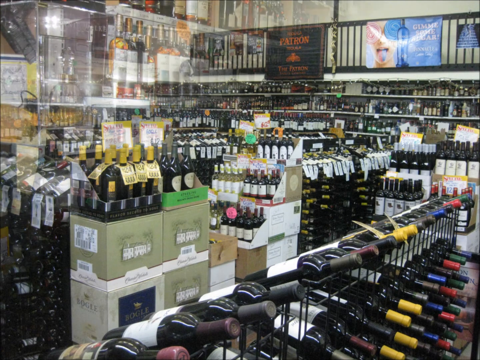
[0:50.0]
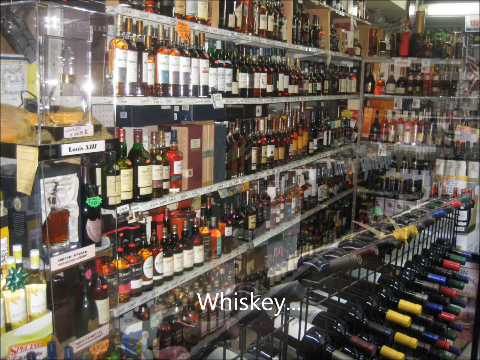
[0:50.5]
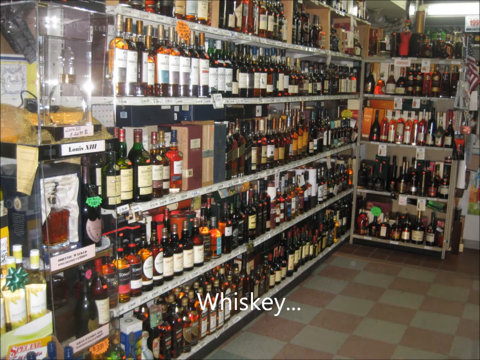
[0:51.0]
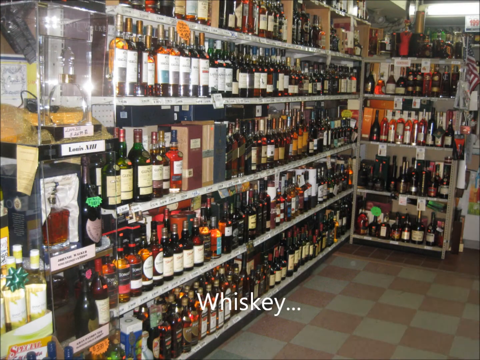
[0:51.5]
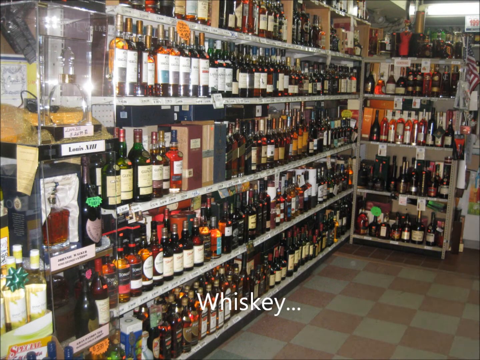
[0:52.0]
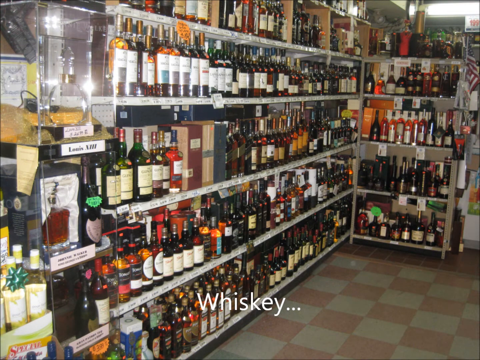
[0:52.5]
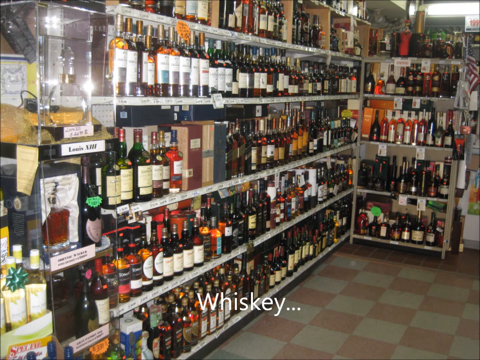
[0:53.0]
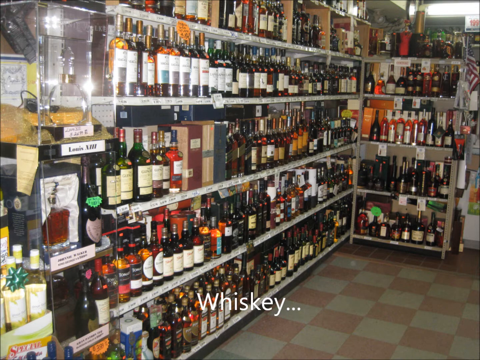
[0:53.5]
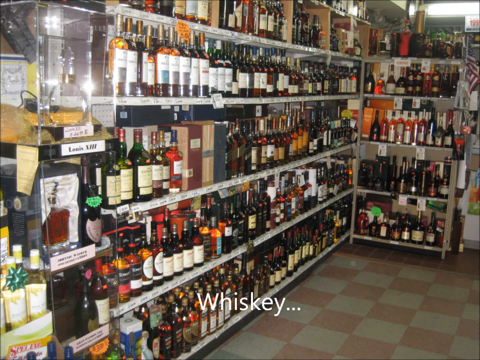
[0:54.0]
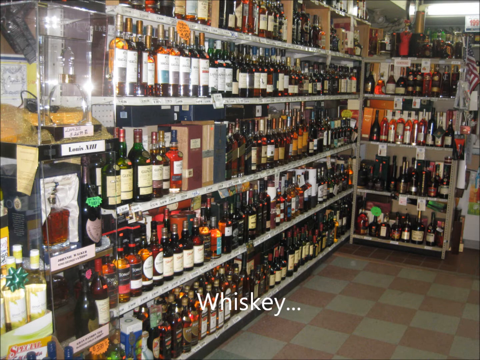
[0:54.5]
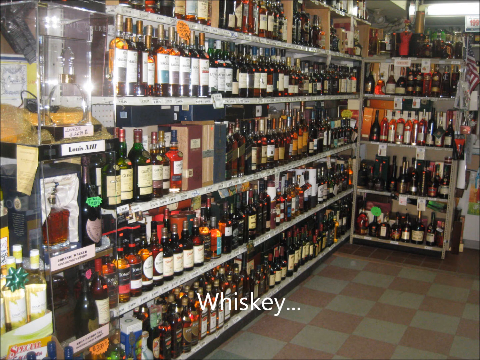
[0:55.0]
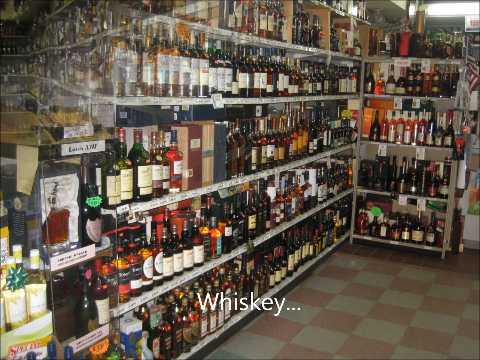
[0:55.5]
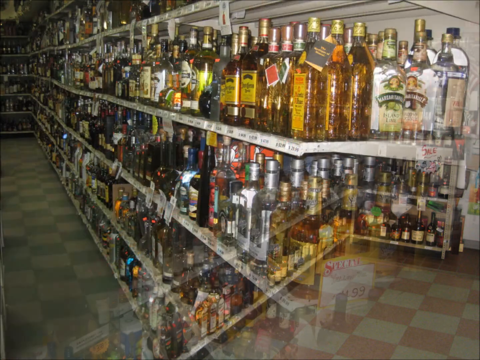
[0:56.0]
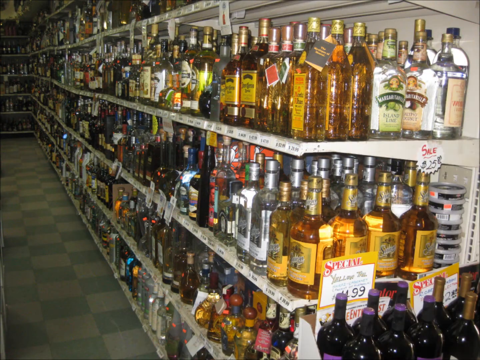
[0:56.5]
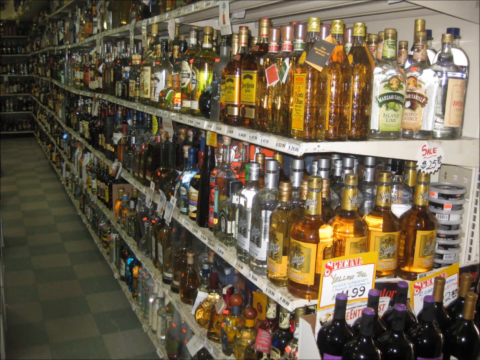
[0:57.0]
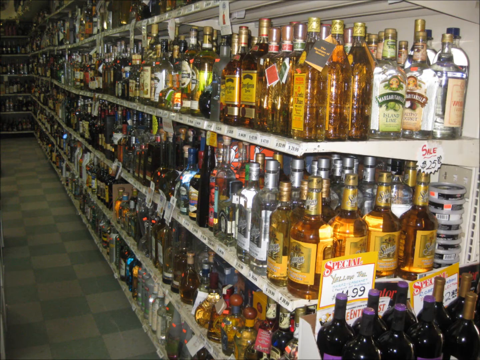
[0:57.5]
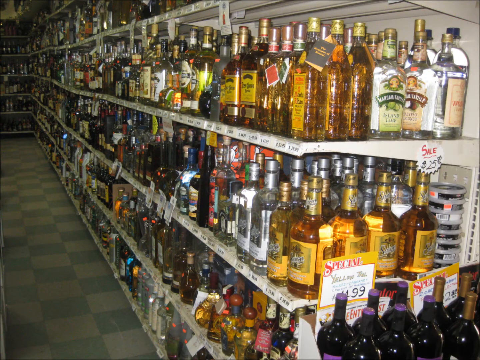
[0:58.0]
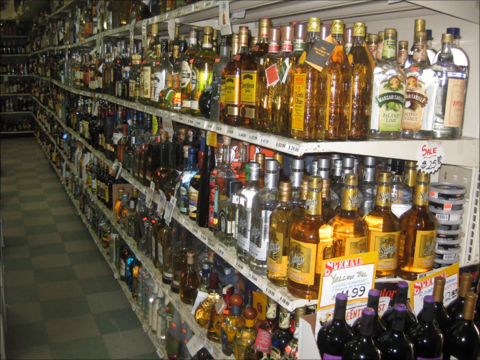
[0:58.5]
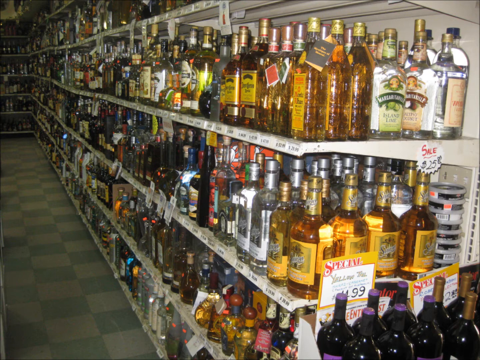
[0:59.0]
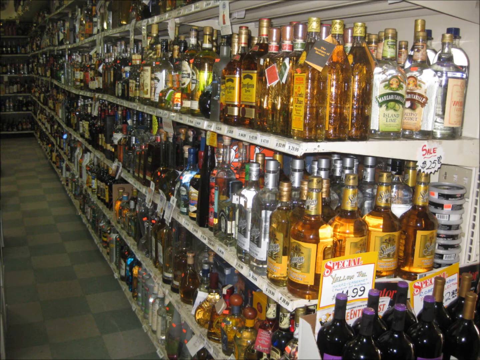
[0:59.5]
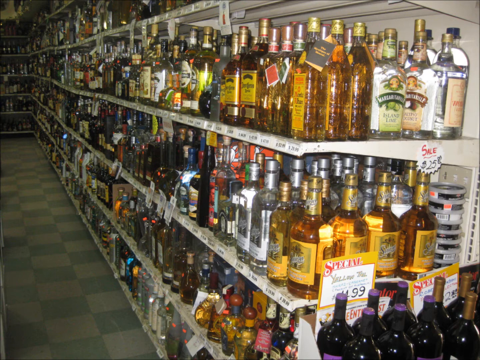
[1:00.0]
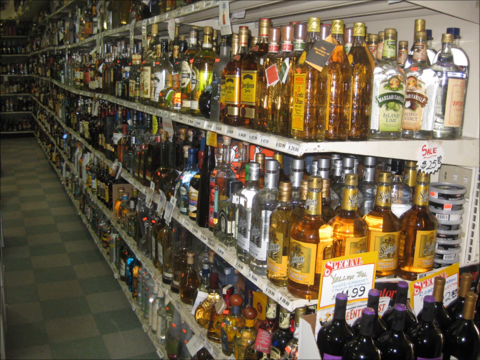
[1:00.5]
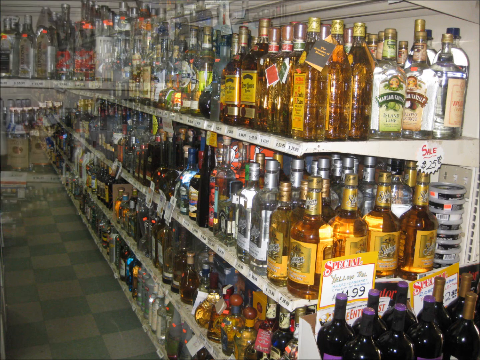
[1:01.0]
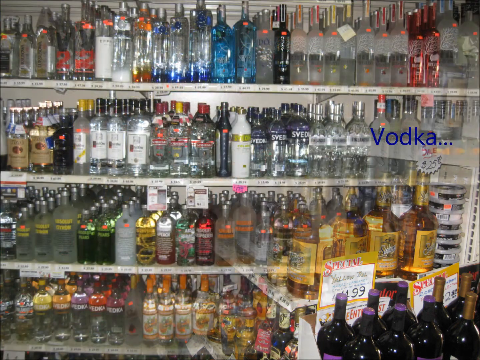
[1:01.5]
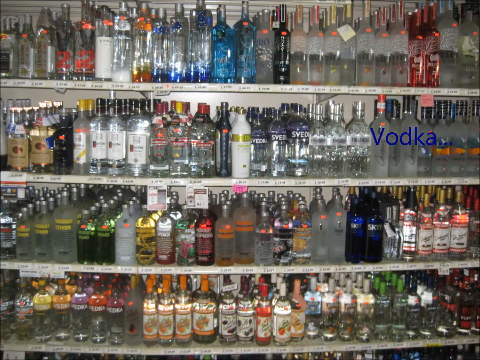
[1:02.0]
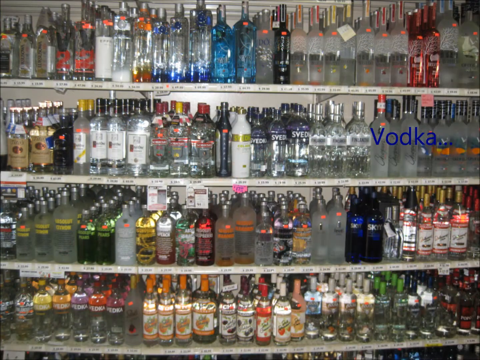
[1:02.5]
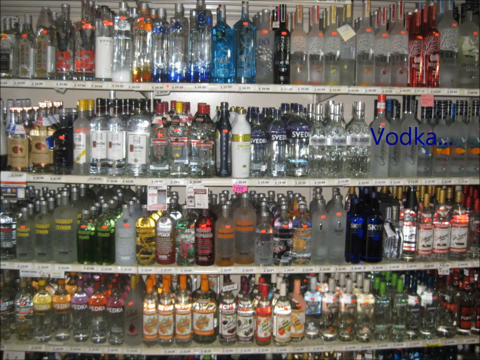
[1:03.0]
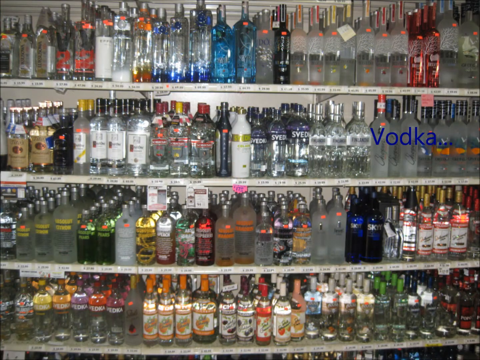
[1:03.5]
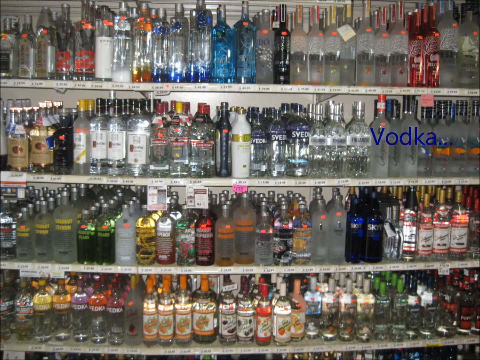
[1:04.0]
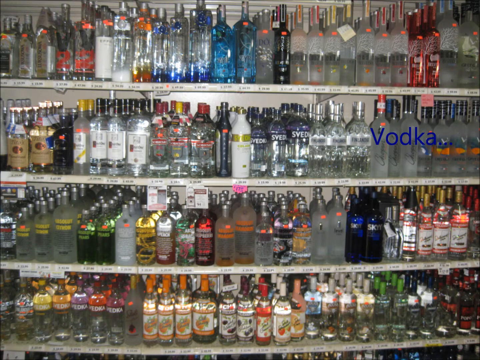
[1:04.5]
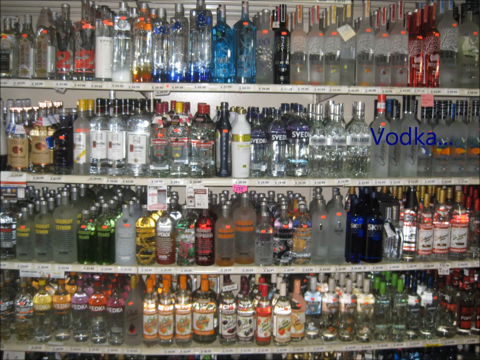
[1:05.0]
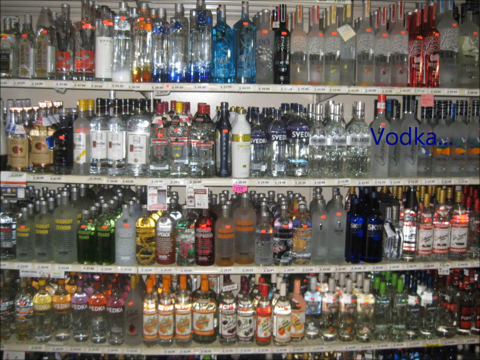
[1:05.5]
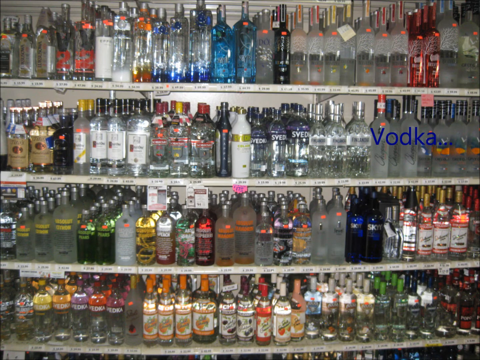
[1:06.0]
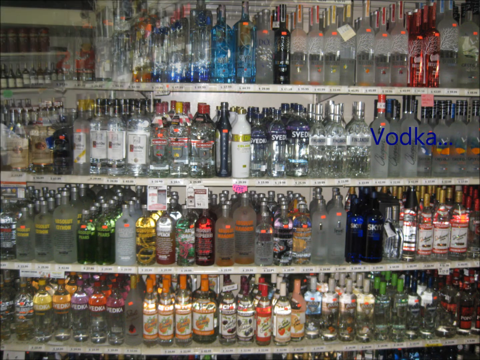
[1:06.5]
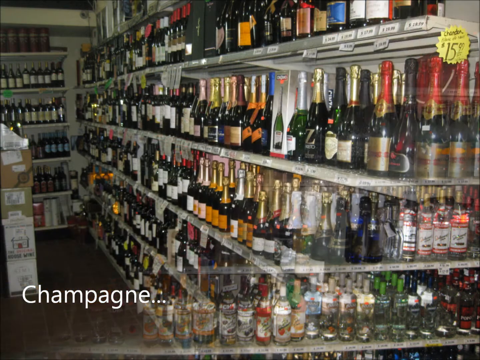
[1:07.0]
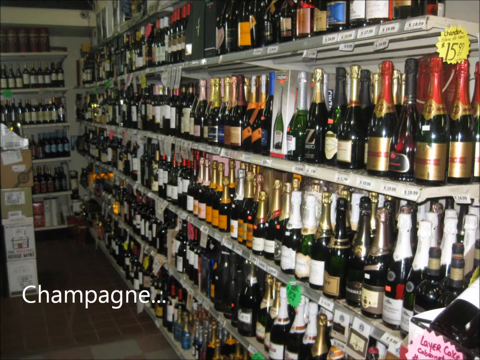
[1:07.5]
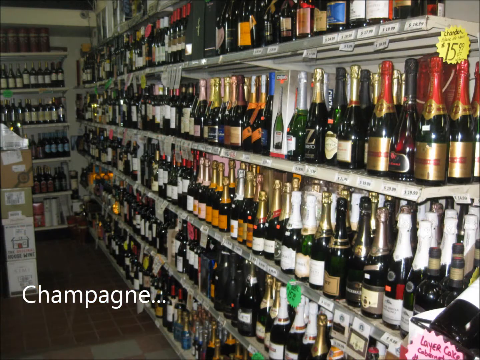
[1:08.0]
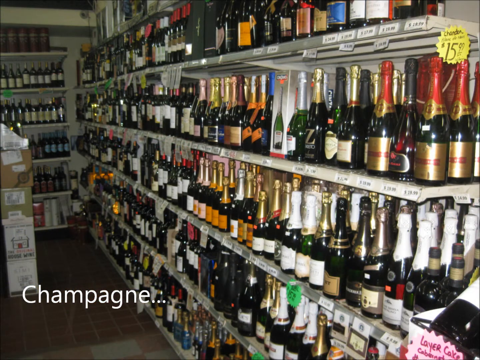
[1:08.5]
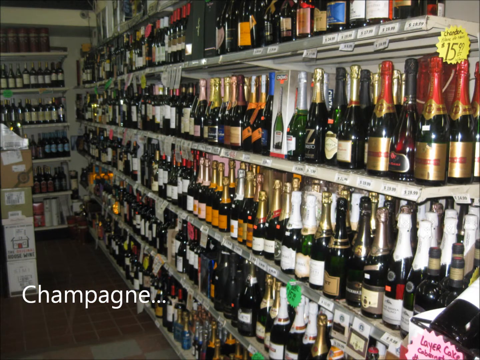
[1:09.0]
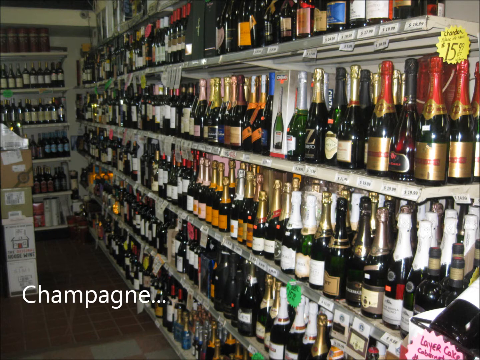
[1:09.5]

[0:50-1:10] Wine is everywhere, in little boxes. Different banners appear; one says "give me some sugar" and shows a person's tongue that is half blue and half pink, so the wine looks cotton candy themed. Another brand called Patron is shown. Most of the products here look like wine rather than liquor.